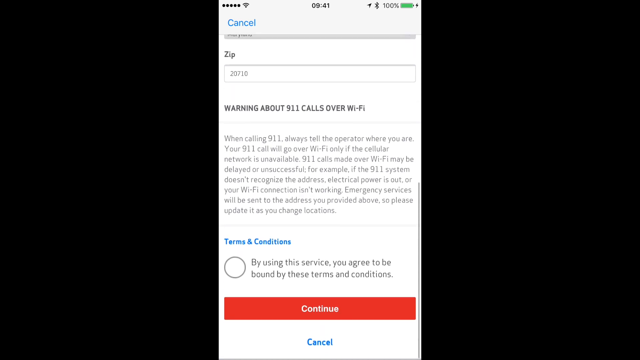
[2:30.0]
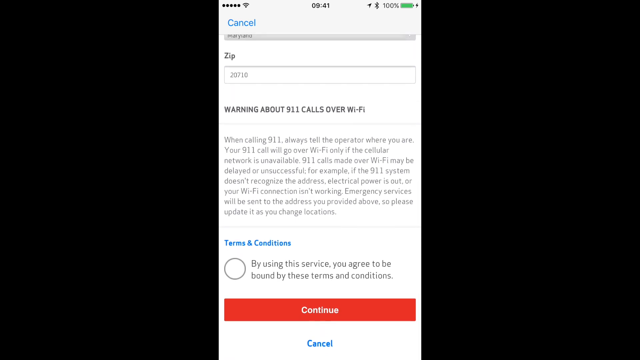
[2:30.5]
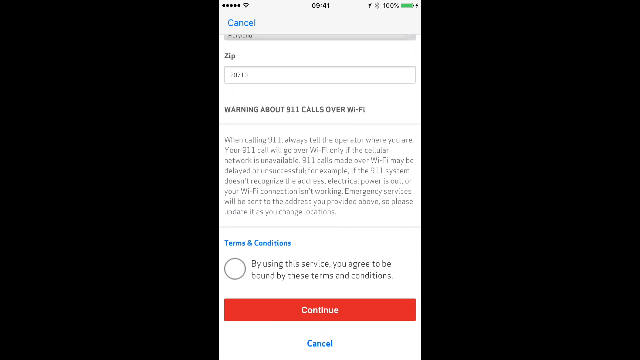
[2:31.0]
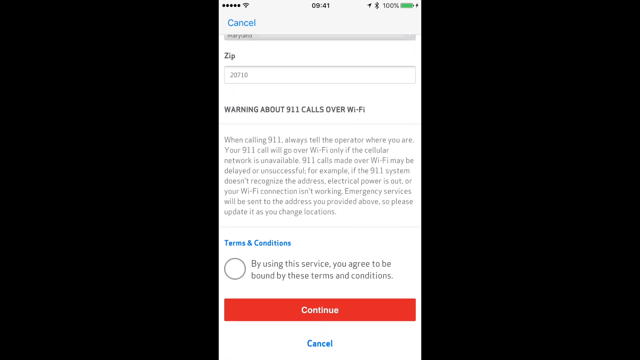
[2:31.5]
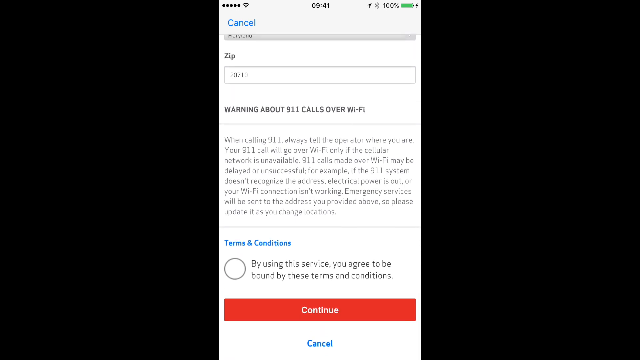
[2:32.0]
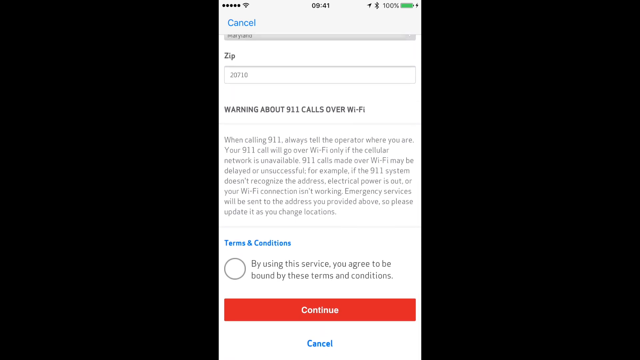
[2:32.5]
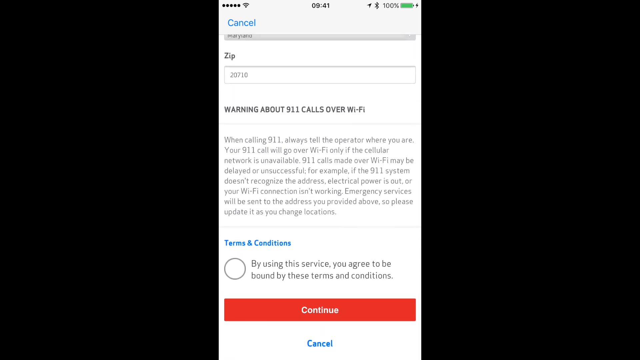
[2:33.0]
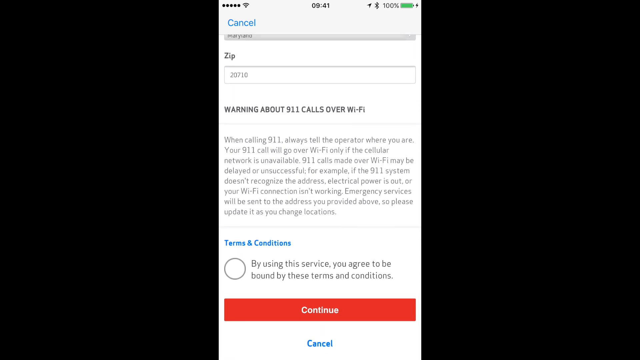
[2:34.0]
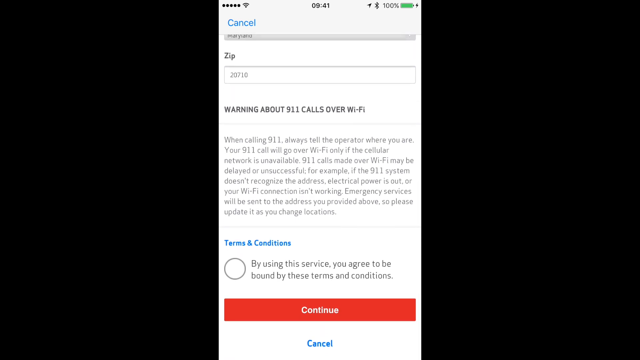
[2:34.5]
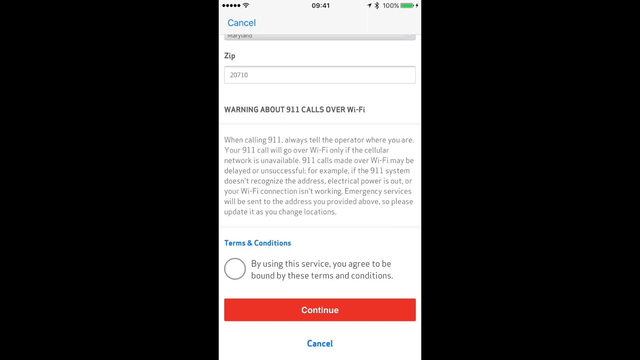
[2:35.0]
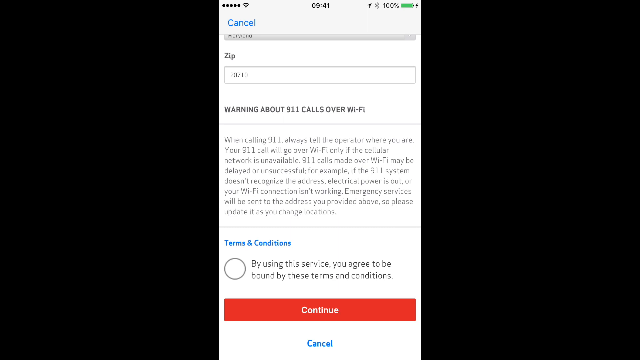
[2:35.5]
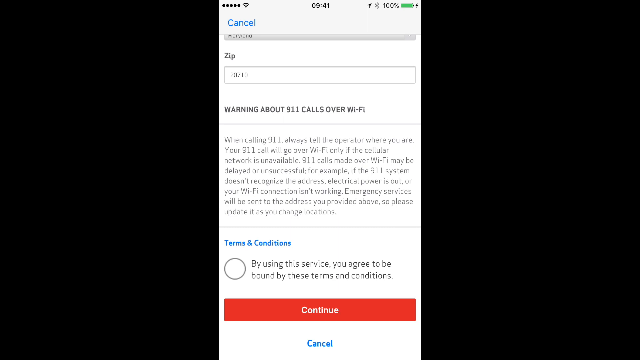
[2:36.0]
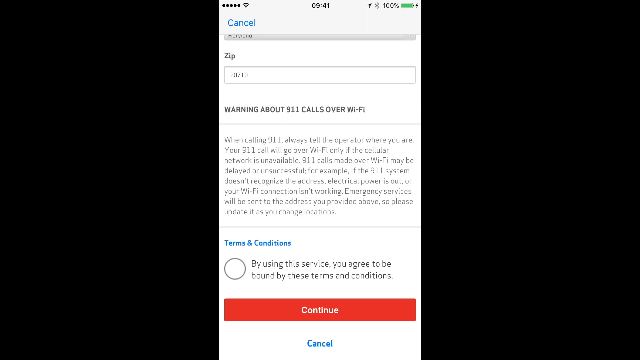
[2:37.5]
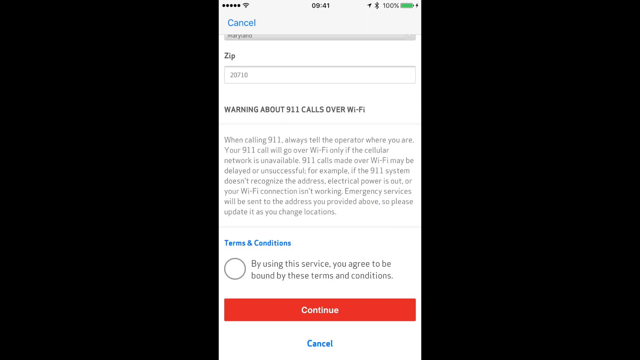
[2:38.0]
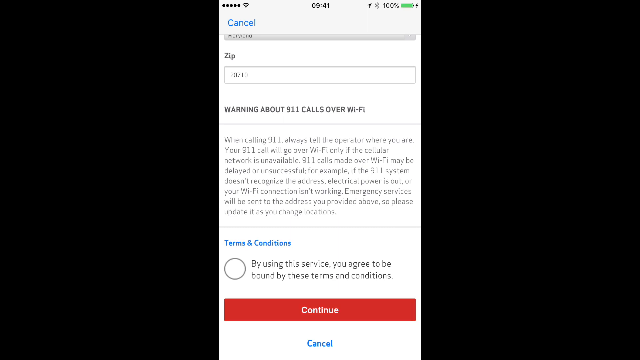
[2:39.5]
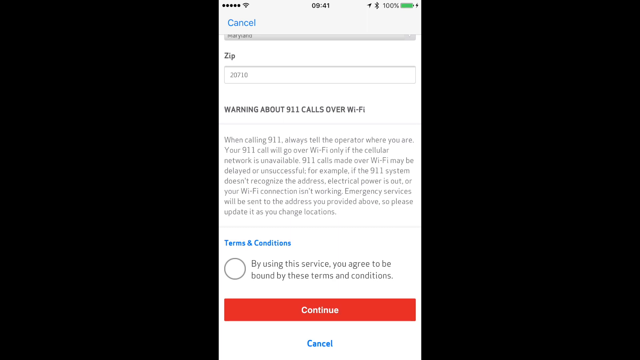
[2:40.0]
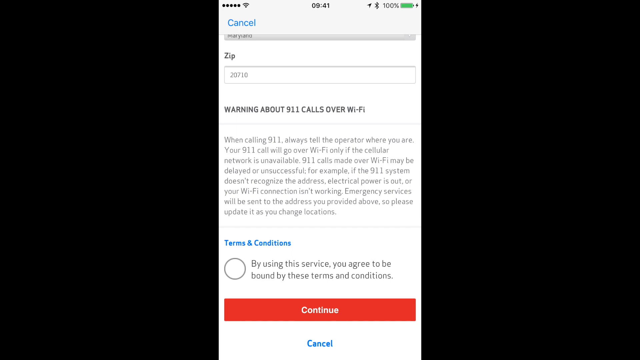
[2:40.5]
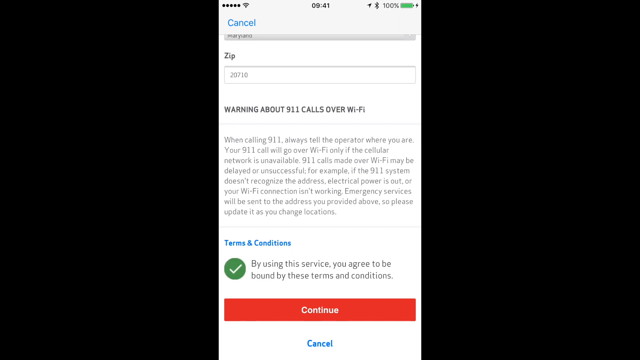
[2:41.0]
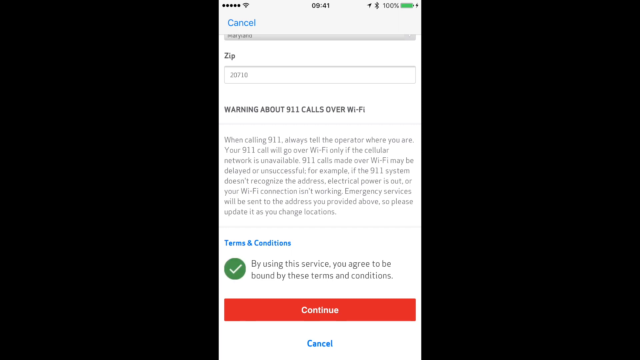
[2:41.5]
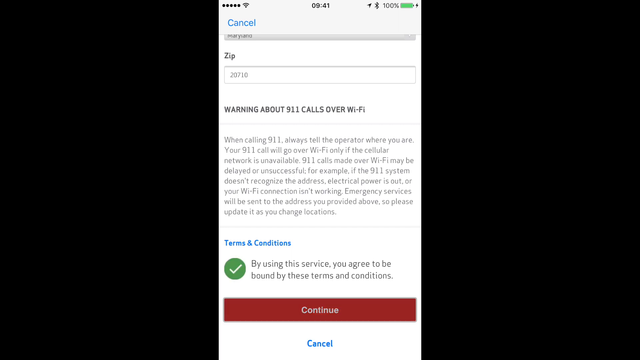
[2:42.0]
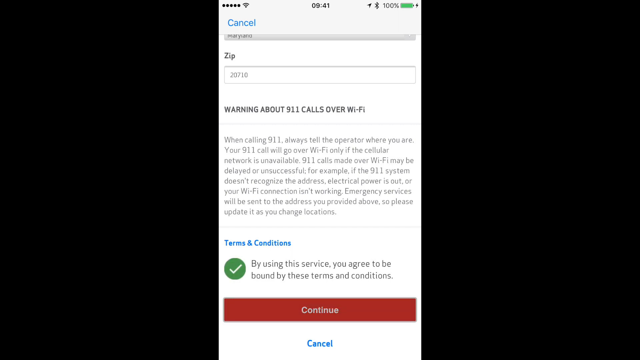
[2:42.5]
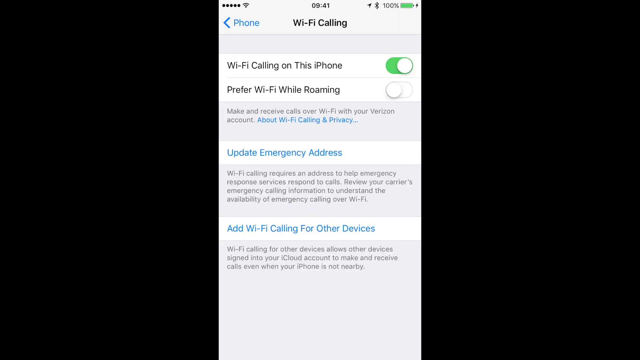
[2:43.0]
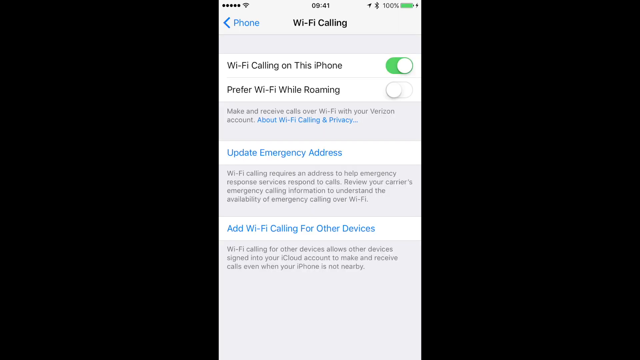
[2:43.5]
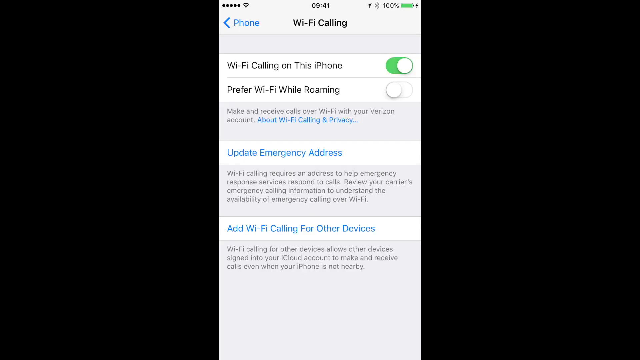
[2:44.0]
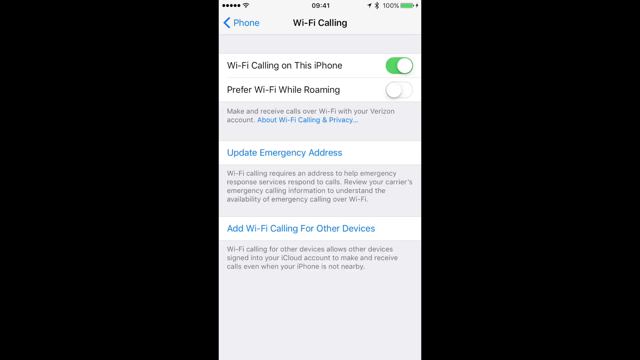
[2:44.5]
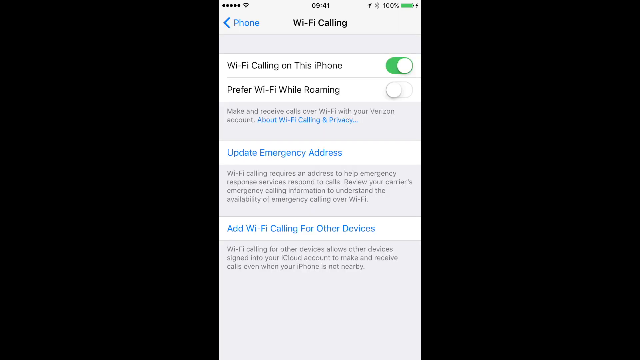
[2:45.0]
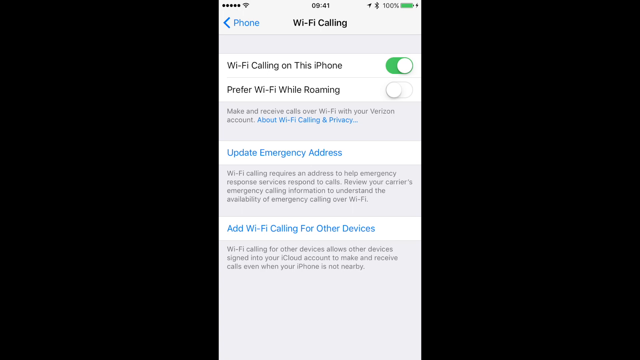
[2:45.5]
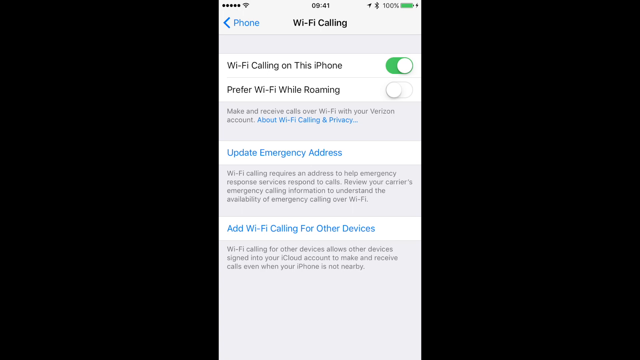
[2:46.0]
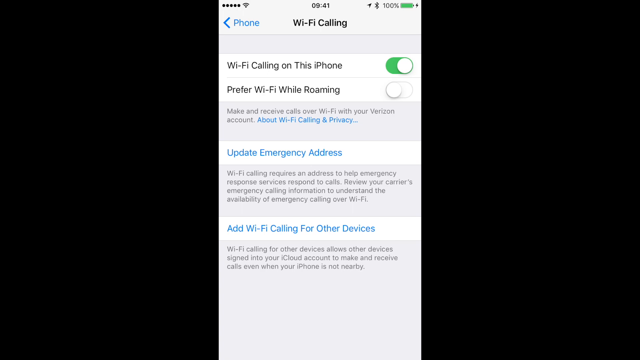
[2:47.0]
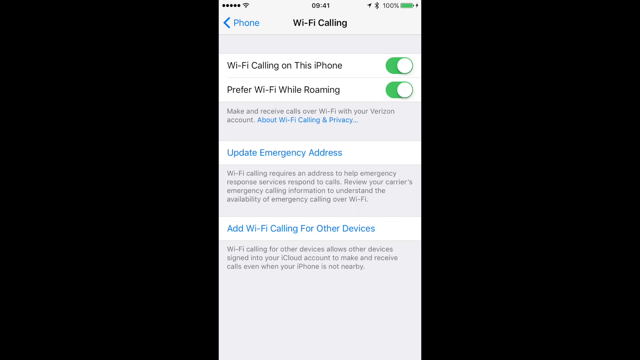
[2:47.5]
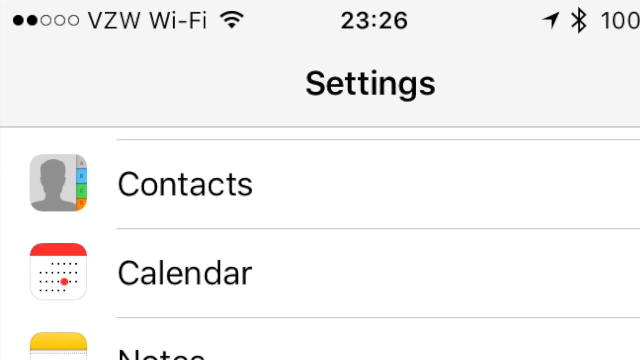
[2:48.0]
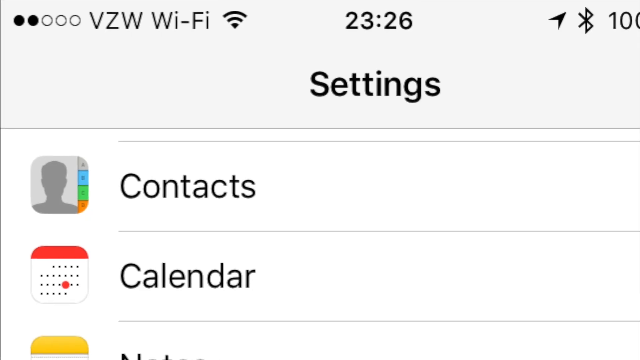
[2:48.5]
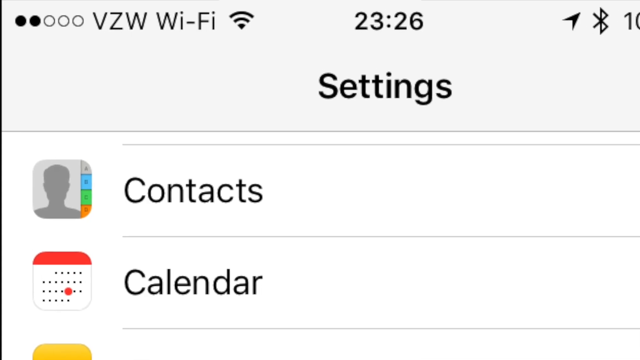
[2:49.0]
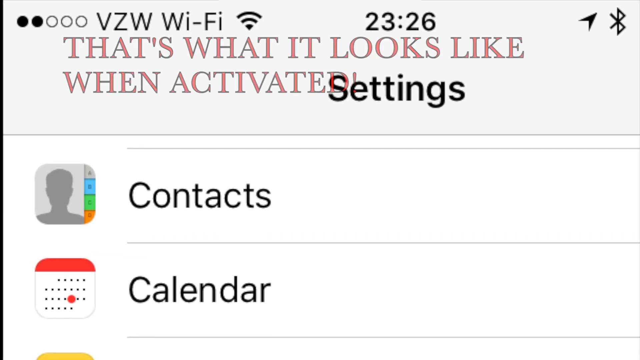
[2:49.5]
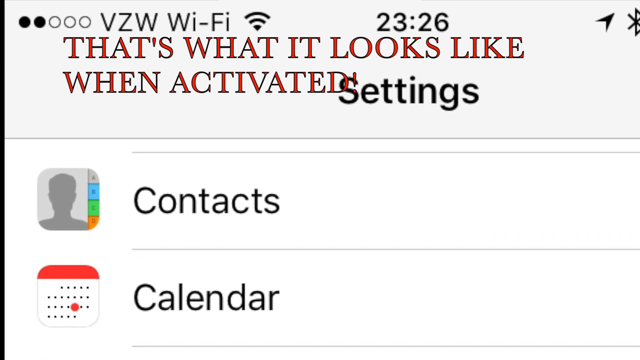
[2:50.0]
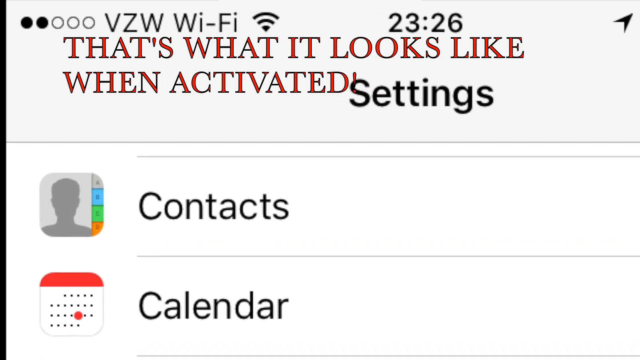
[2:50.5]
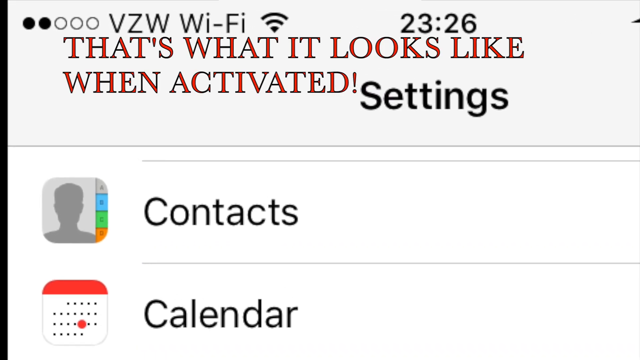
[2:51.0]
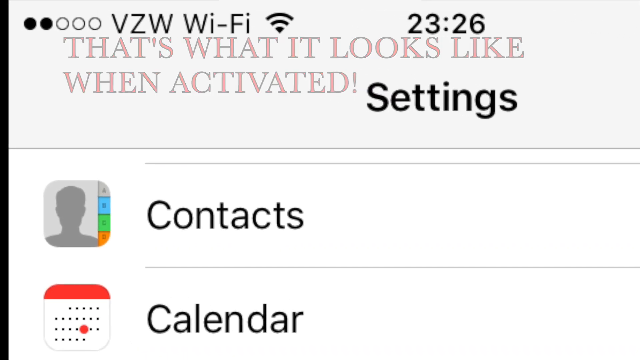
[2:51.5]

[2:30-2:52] The mobile device's screen is in the very center of the black background, fixed on the terms and conditions section with the tick box still unchecked, which says "by using this service you agree to be bound by these terms and conditions". There is a red continue button with white text and a cancel option in blue text. The screen stays on this area for some time before the terms and conditions tick box is selected, filling the bubble with a green shade and a white check mark. The screen then goes back to the Wi-Fi calling settings section, where Wi-Fi calling on this phone is enabled via the toggle button.